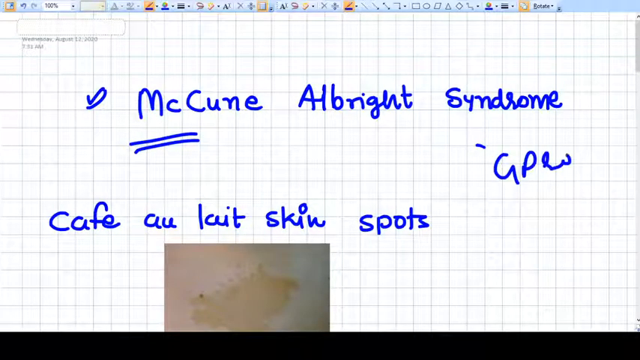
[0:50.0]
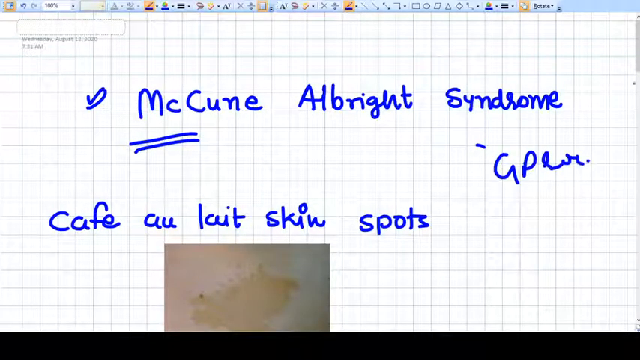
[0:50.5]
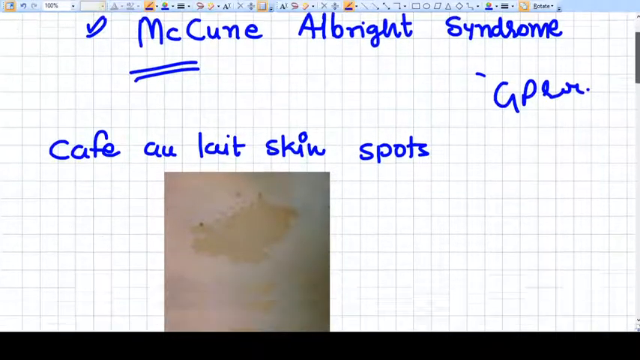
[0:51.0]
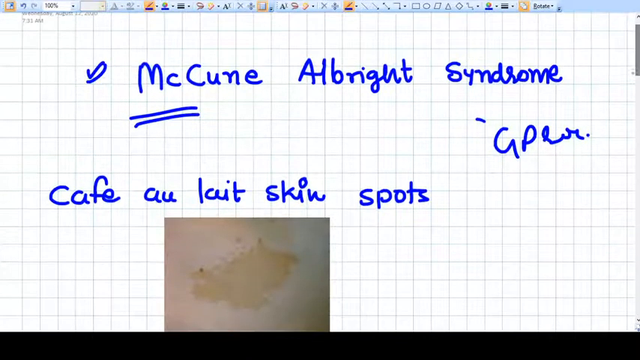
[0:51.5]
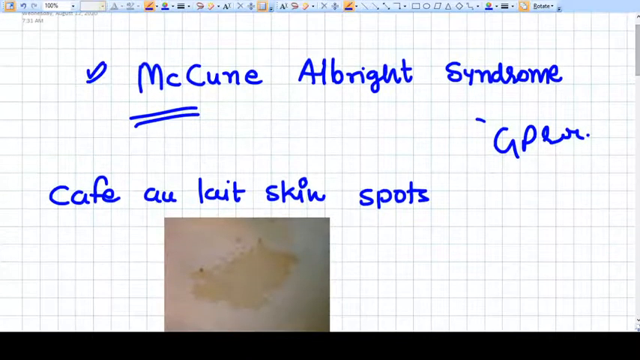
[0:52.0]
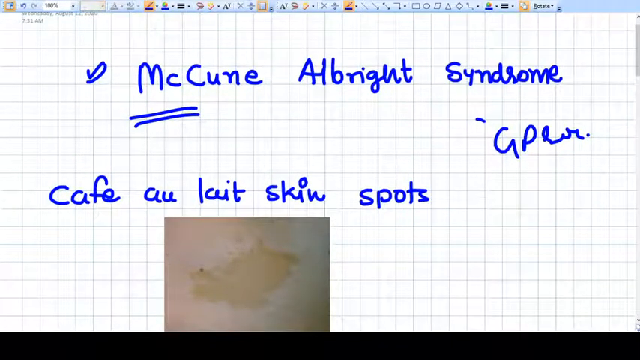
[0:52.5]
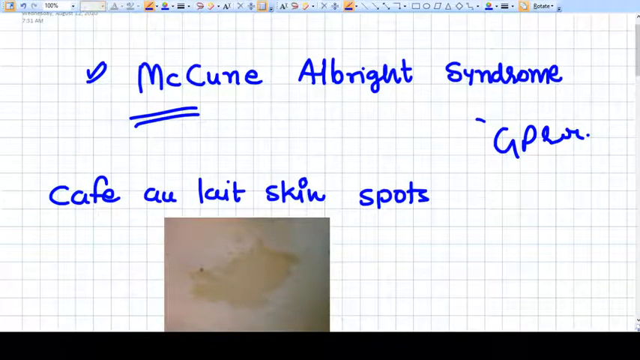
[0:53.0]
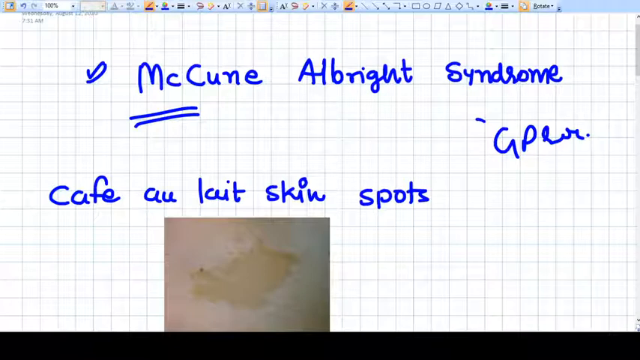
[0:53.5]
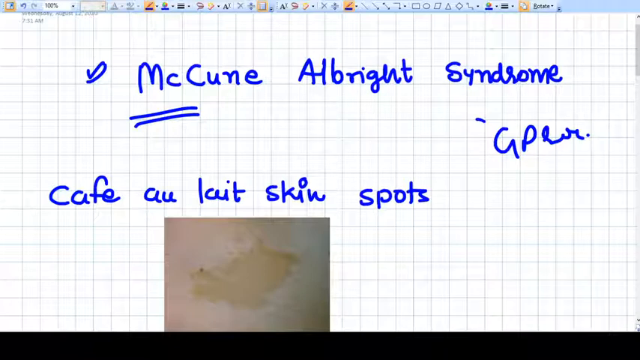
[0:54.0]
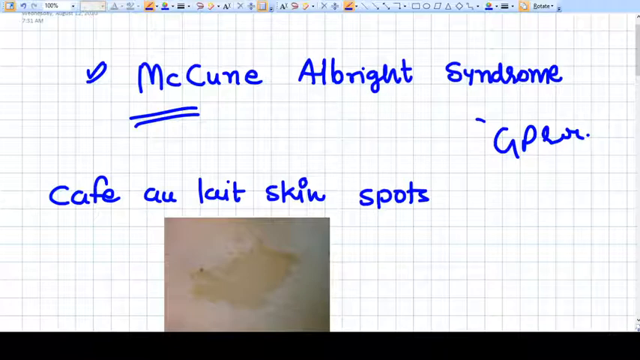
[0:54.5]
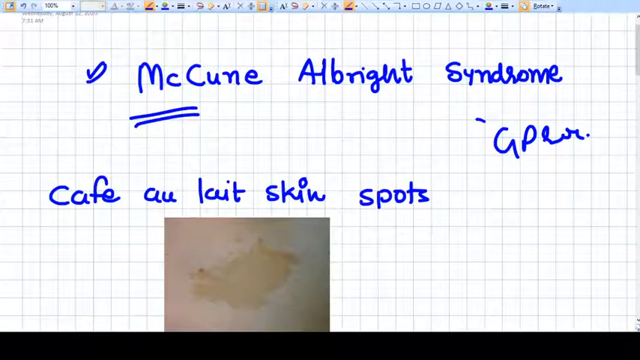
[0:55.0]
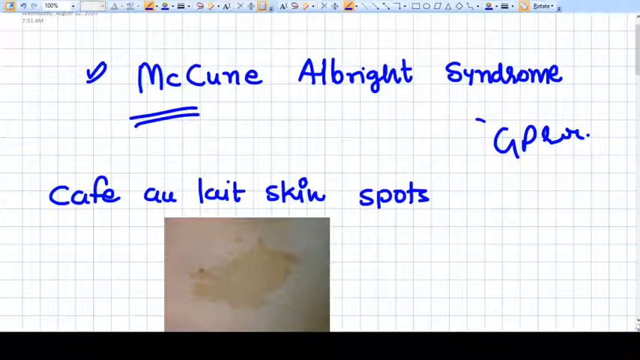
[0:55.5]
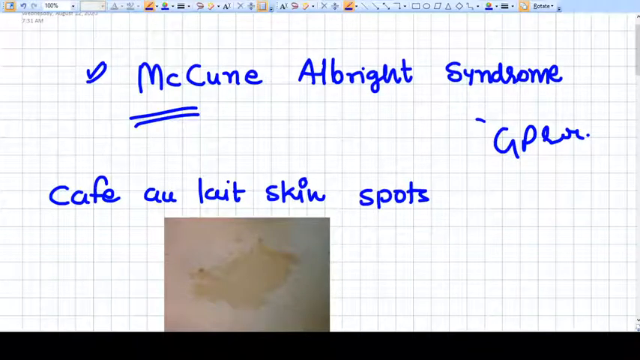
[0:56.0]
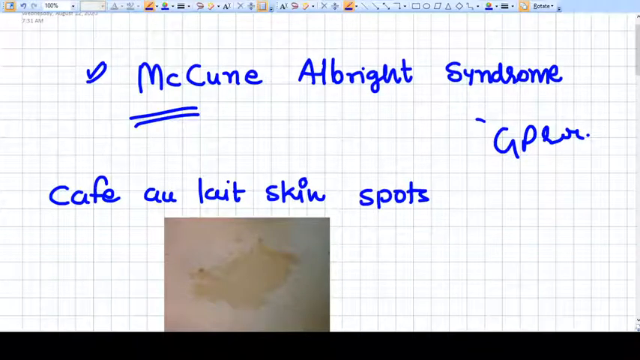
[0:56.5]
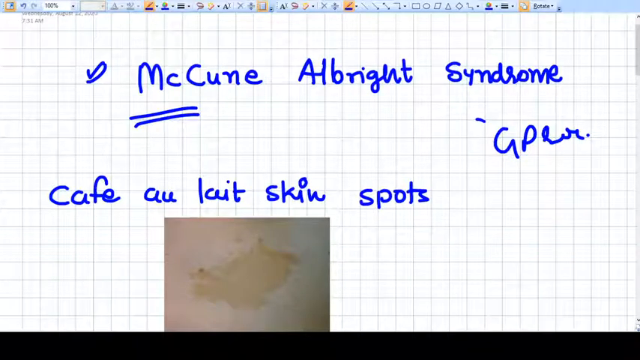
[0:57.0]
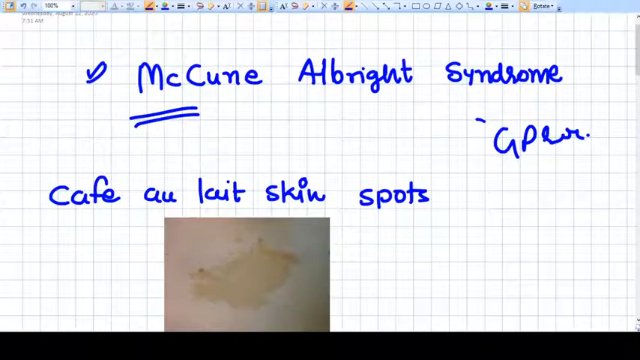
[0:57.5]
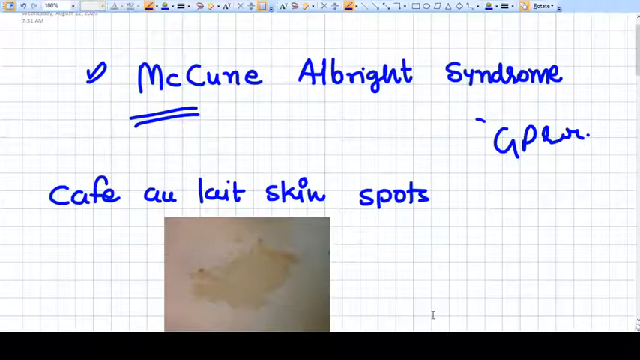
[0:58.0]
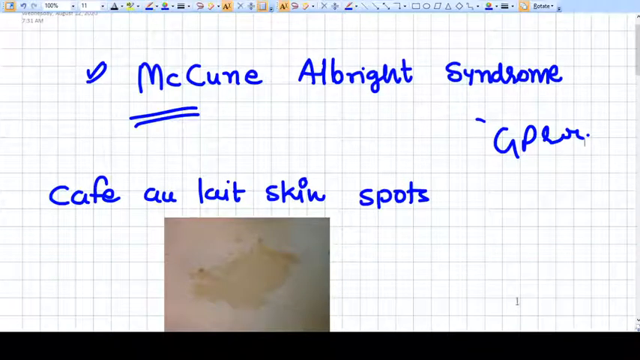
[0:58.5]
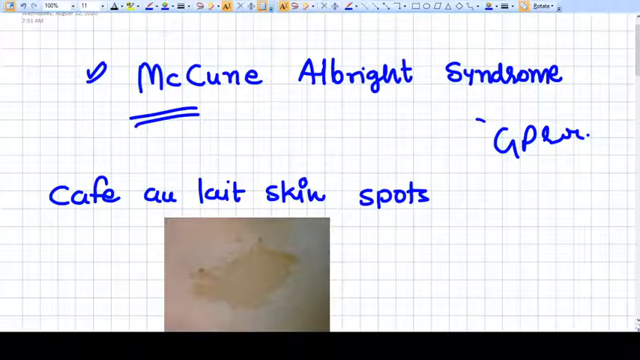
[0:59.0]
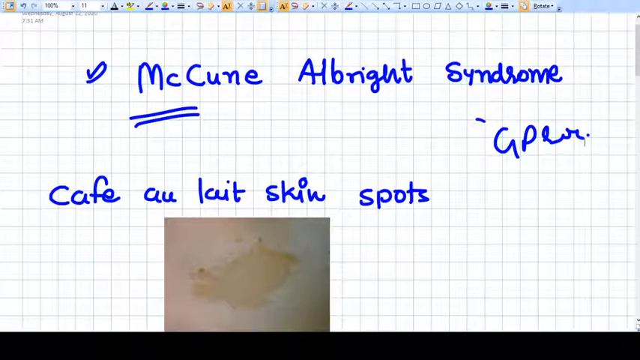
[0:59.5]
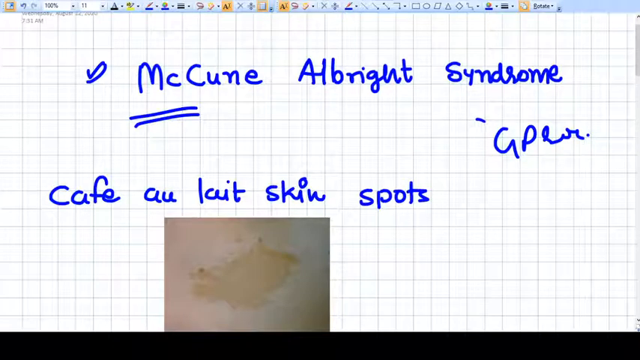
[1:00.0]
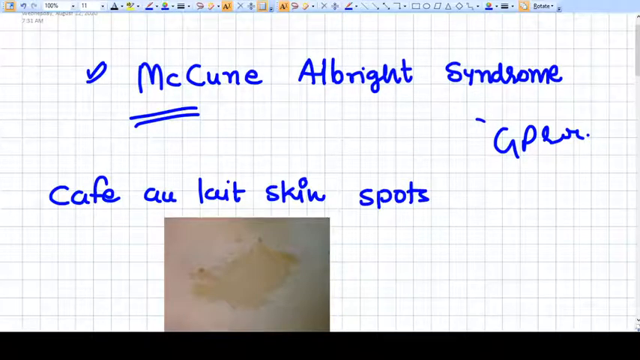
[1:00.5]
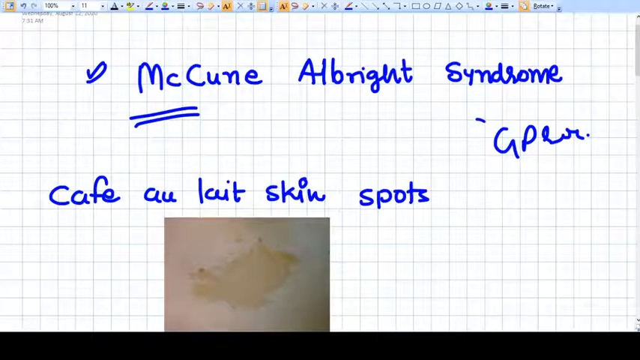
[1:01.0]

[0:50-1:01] The user starts writing a blurry, hard-to-read word that seems to say "G-P-E-R," though it is not clear. Nothing else really happens. The view is at 100%, and a drawing tool to the right of that is selected; it looks like a circle tool or a color tool, since there is a color wheel. To the right are what look like three squares in front of each other, perhaps representing the grid layout being used, and on the far right is a rotate button.